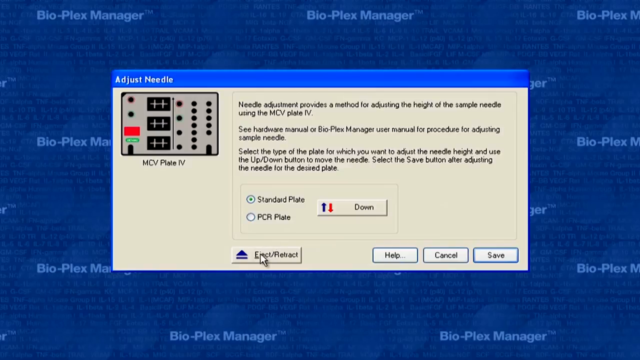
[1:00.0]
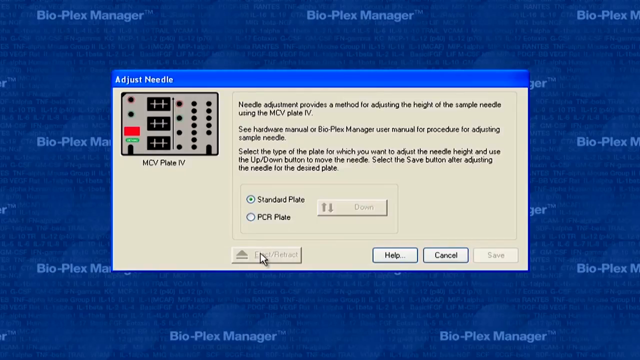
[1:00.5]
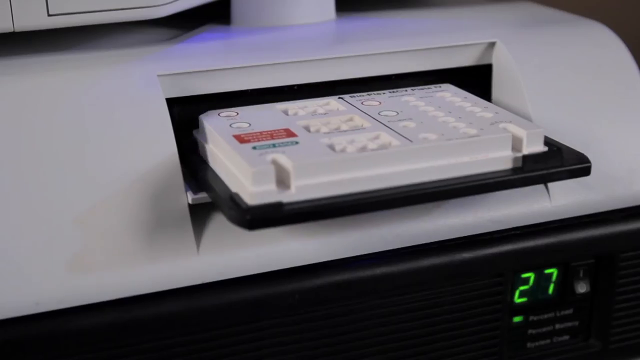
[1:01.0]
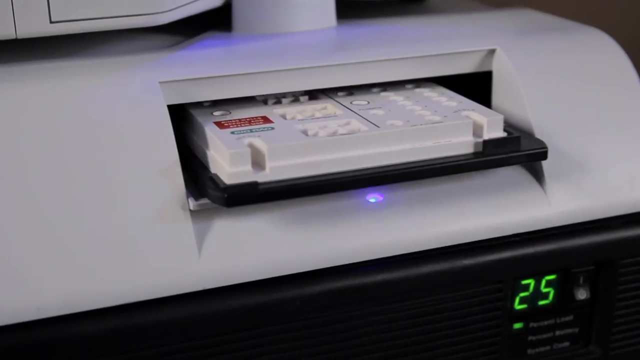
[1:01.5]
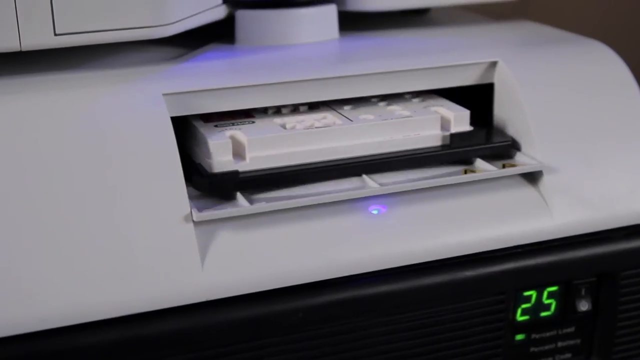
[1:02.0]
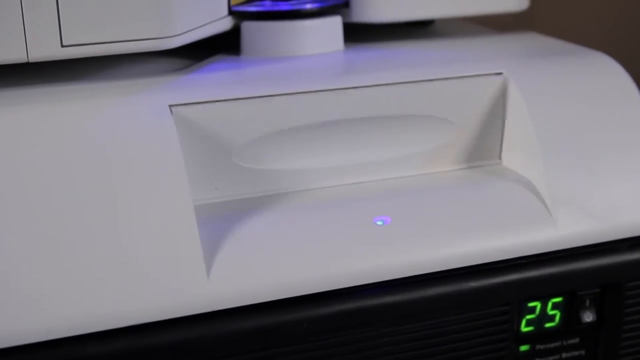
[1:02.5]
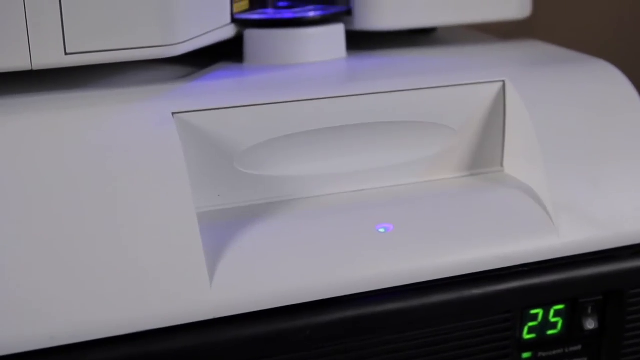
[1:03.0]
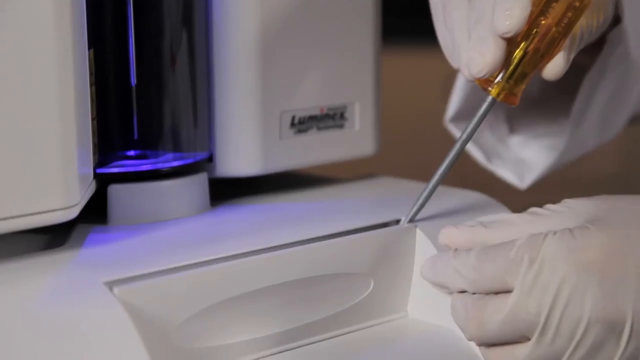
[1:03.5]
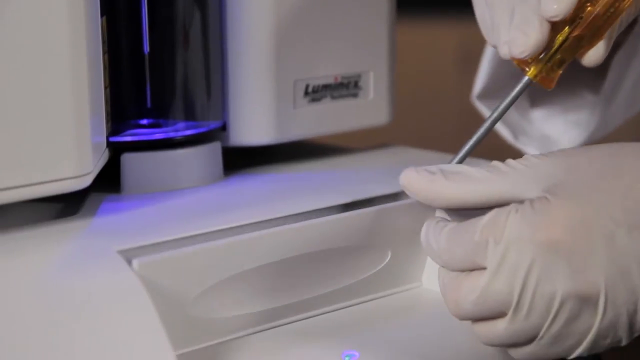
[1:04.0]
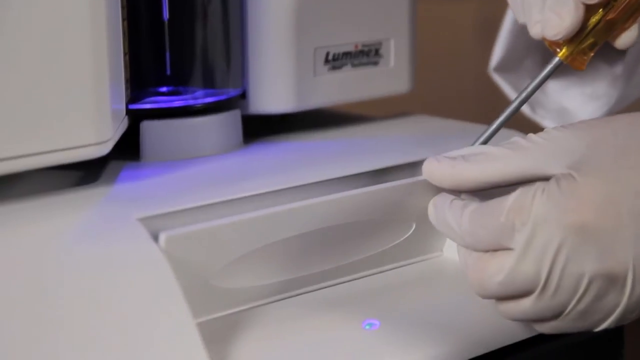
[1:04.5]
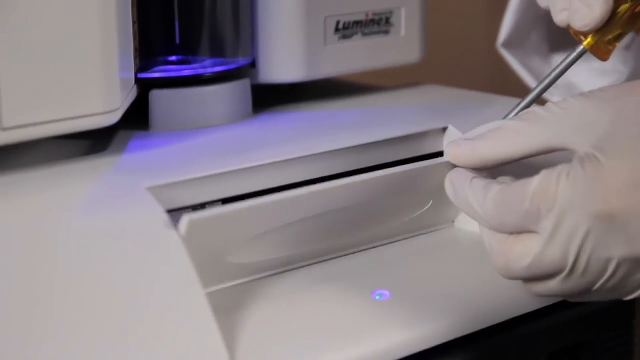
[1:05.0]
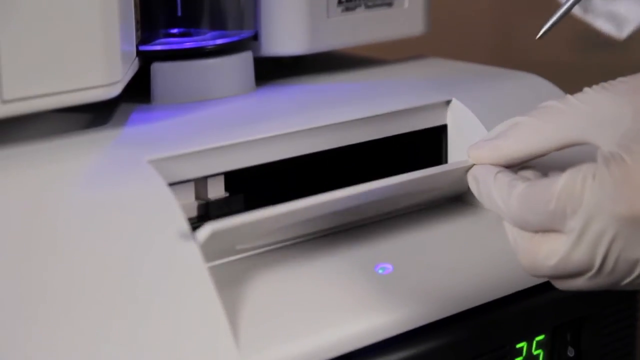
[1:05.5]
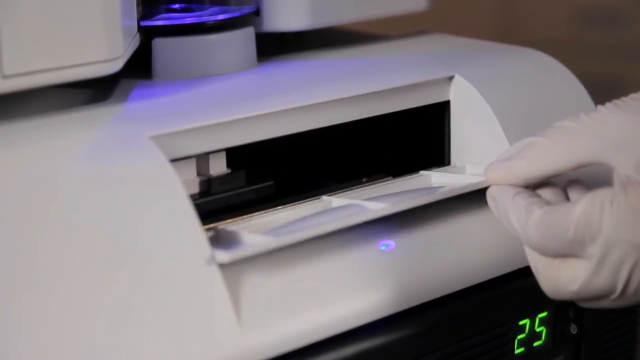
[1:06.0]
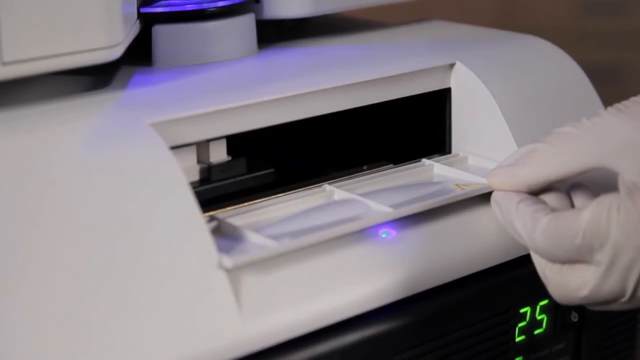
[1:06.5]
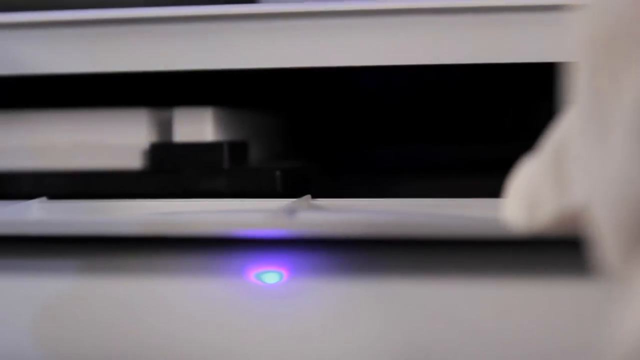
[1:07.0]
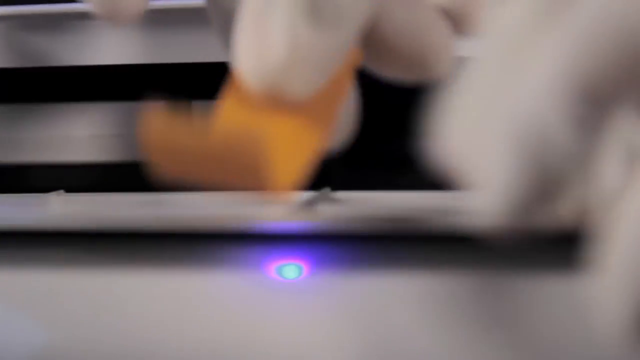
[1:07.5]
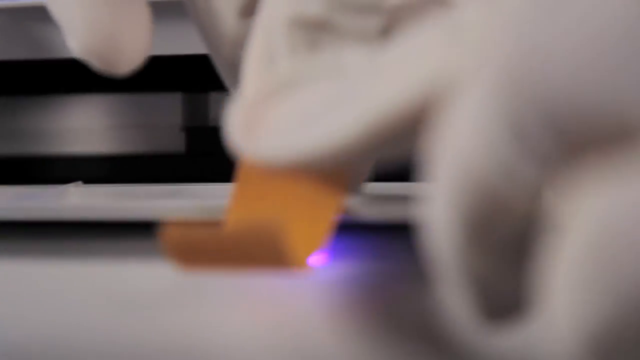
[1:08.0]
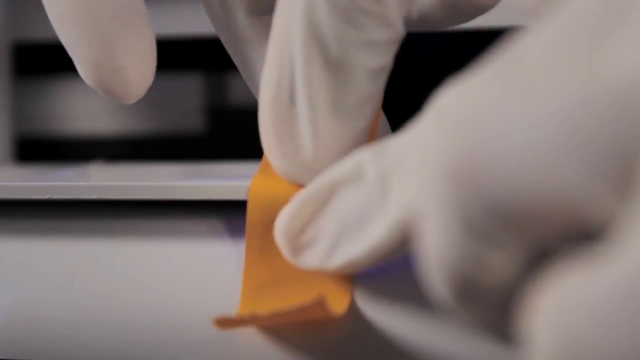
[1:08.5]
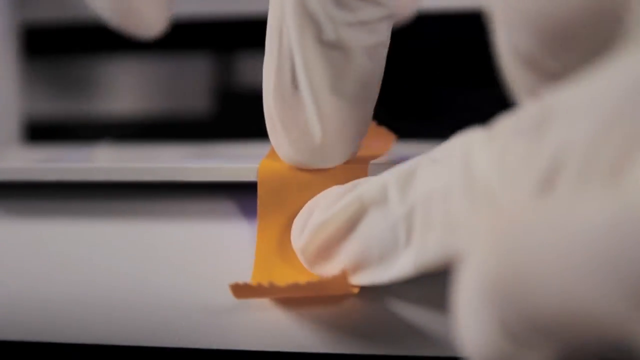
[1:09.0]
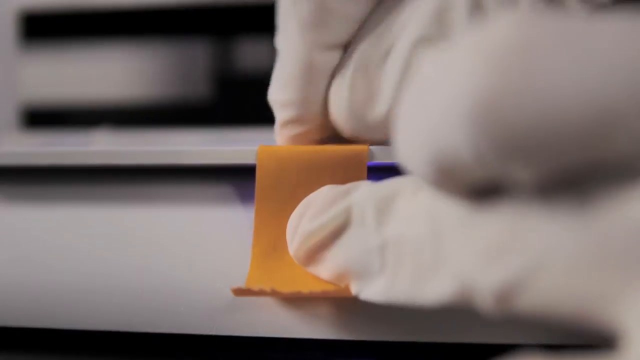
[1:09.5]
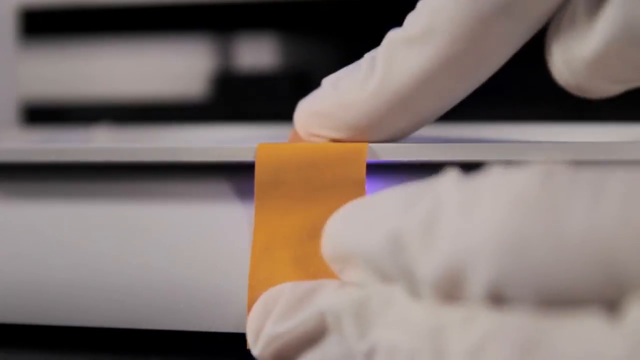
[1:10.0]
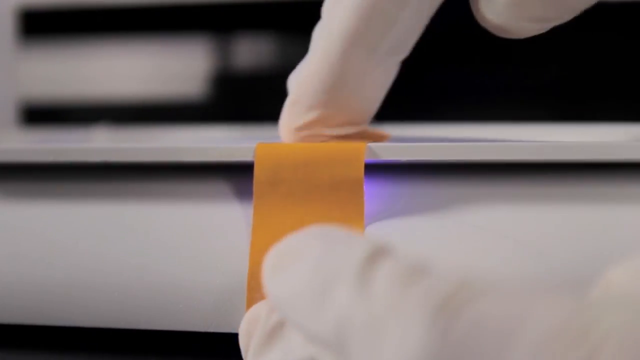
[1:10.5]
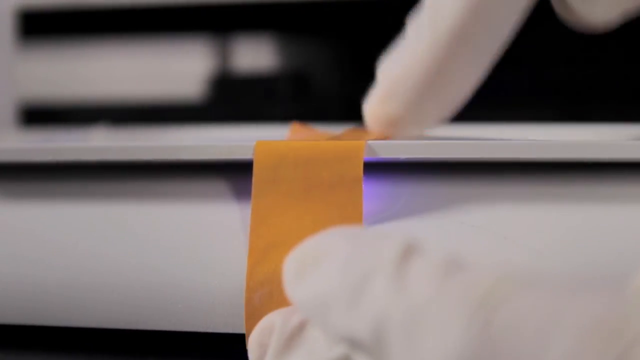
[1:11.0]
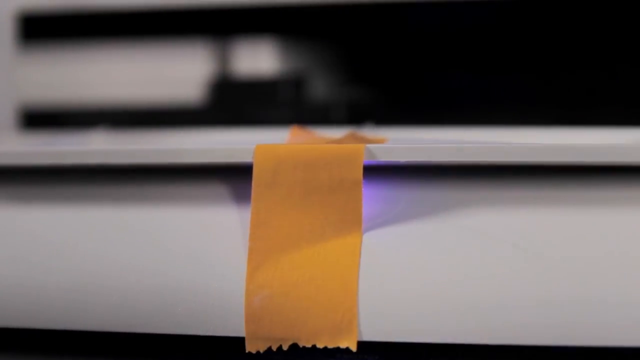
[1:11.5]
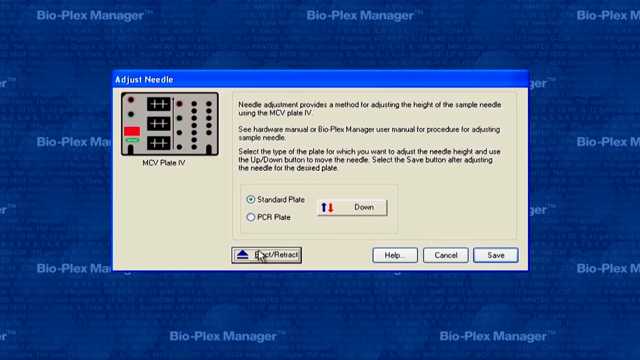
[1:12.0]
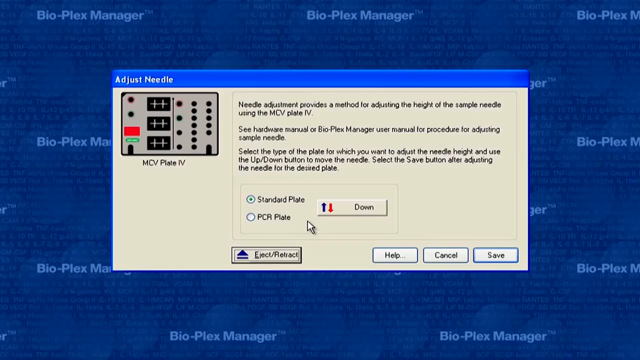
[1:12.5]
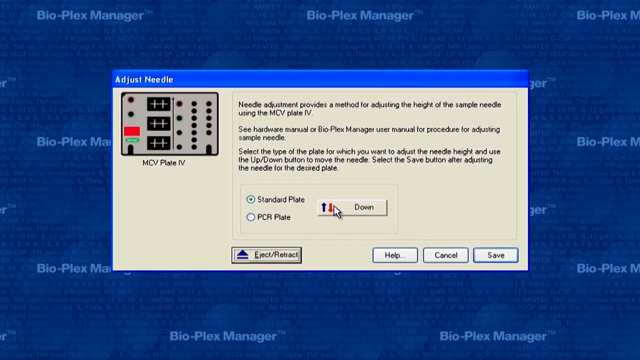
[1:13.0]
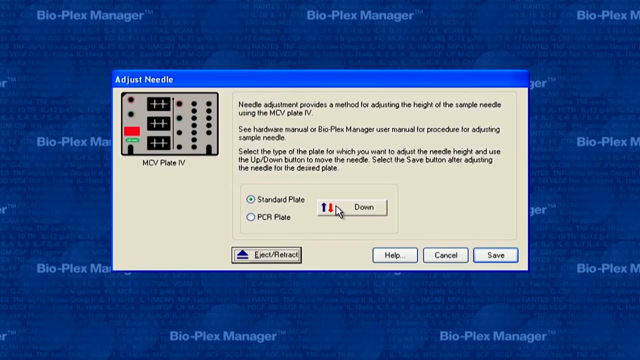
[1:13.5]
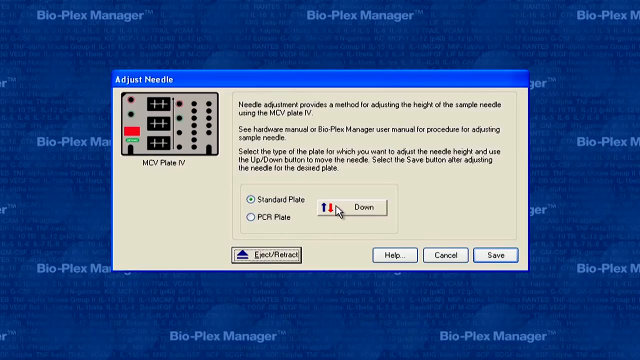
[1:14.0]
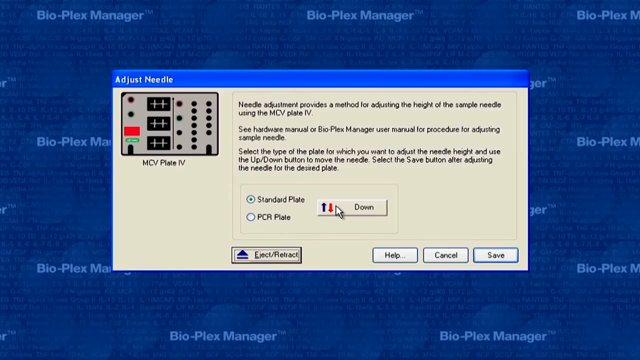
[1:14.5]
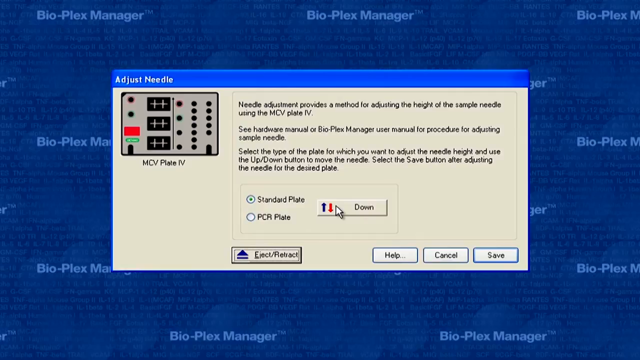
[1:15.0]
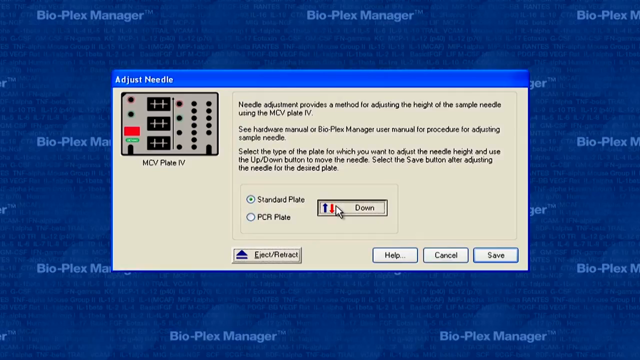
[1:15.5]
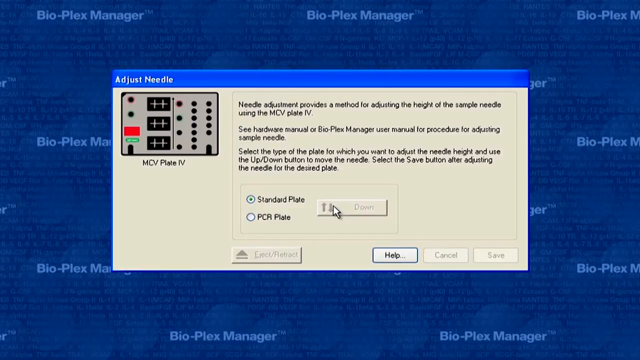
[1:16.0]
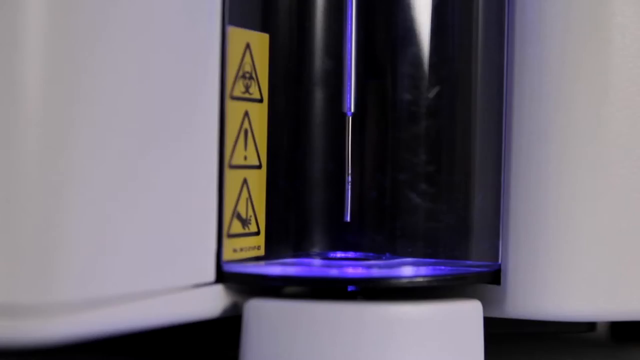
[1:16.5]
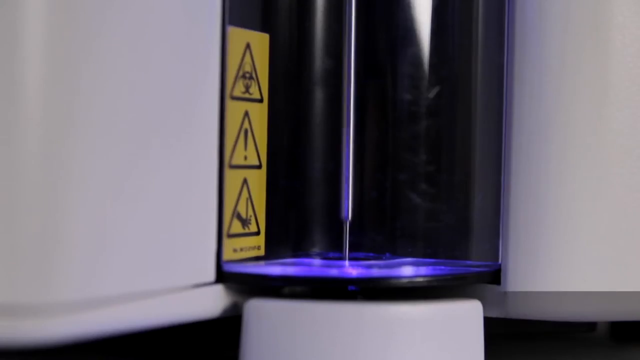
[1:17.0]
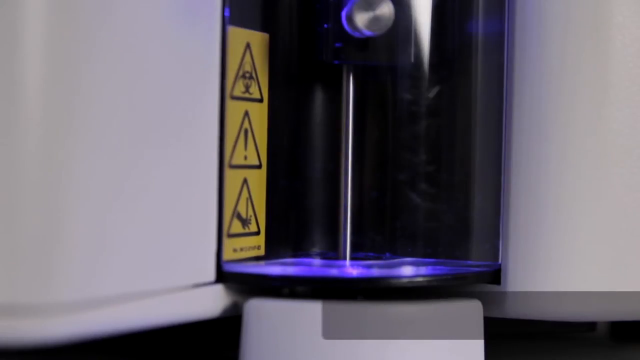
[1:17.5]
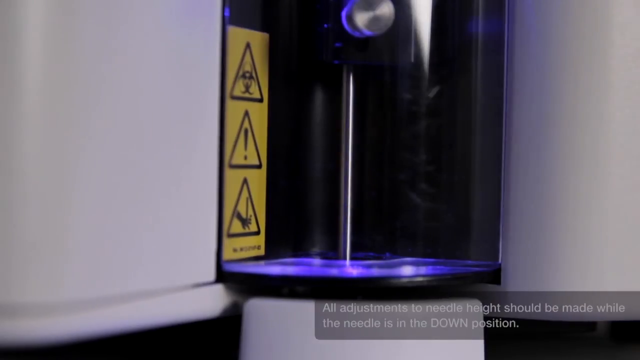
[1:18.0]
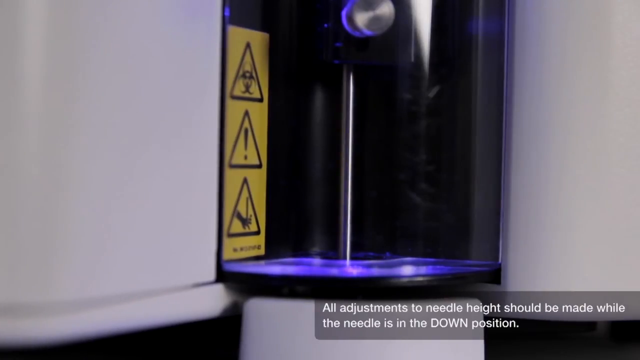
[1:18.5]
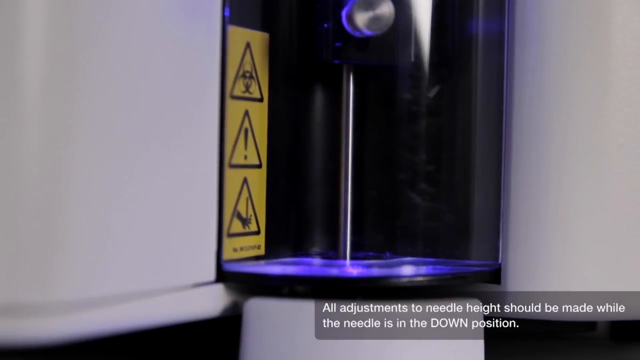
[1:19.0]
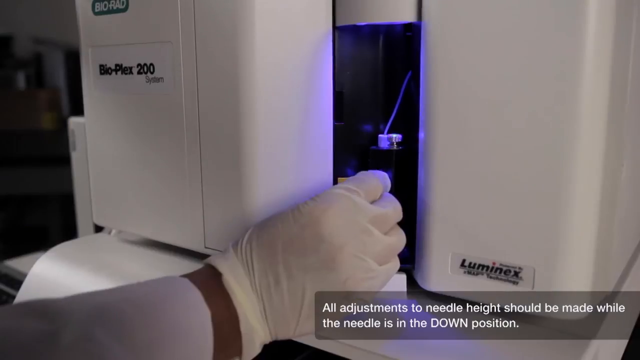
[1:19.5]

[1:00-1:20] A computer screen has a blue background with the white text "Bio-Plex Manager" interspersed throughout in 9 instances. In the middle of the screen is a pop-up labelled "Adjust Needle." The cursor hovers over a button in the lower left section of the pop-up labelled "Enact/Retract" and clicks it. The video fades to the black tray, with a rectangular white object placed on it, retracting into a white machine. In the lower right corner, a digital display showing the number 26 in green text changes to 25. The door or lid of the machine comes up and seals the slot the black tray retracted into. The lab person then holds a yellow screwdriver in their right hand with the middle finger, pointer finger and thumb, while grasping the lid of the slot with the thumb and pointer finger of their left hand. The camera pans down and to the left as the lab person uses the screwdriver as a wedge and pulls the lid down. The lab person pulls the screwdriver out of view up and to the right as the lid is brought down, its upper right corner held between the white-gloved thumb and pointer finger. The angle changes to look directly at the front of the slot as the lab person places an orange strip onto the lid and the side of the machine, holding the strip down at the top of the lid with the right pointer finger while smoothing it out and down on the side with the middle and pointer fingers of the other hand. The video switches to the computer screen as the cursor moves up and to the right to a button in the middle of the "Adjust Needle" pop-up, labelled "Down" in black text, with a blue up arrow and a red down arrow on its left side. The cursor clicks the "Down" button. The video switches to the metallic needle descending into the hole beneath it. The angle then changes to show the gloved hand of the lab person reaching into the slot where the needle is. A transparent textbox in the lower right corner reads, in white text, "All adjustments to needle height should be made when the needle is in the DOWN position."